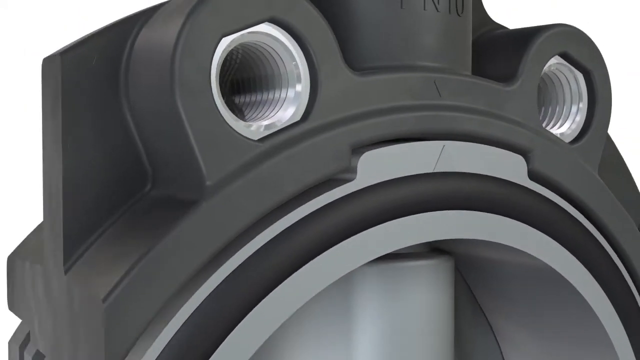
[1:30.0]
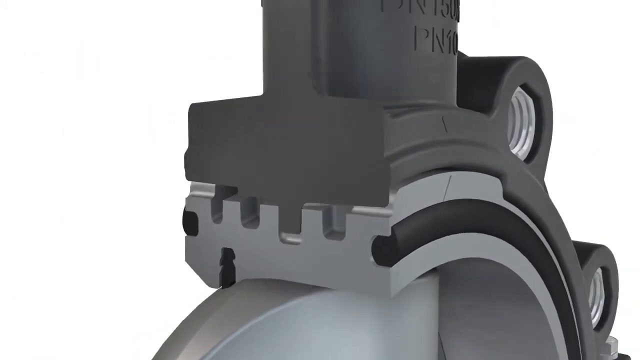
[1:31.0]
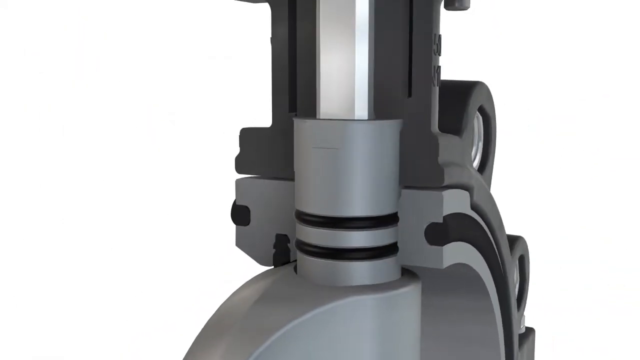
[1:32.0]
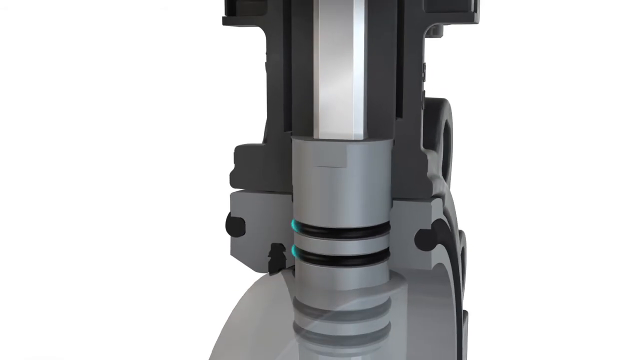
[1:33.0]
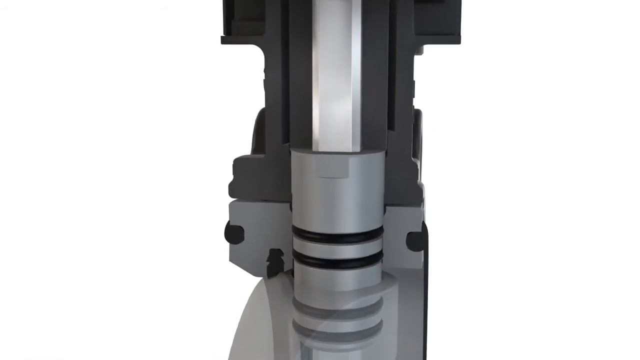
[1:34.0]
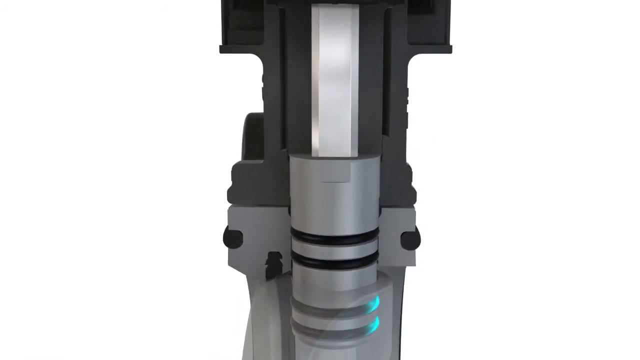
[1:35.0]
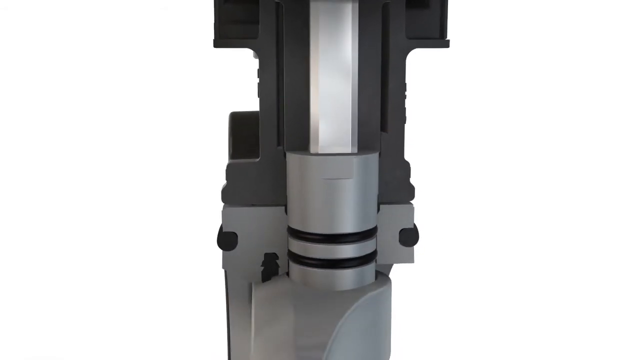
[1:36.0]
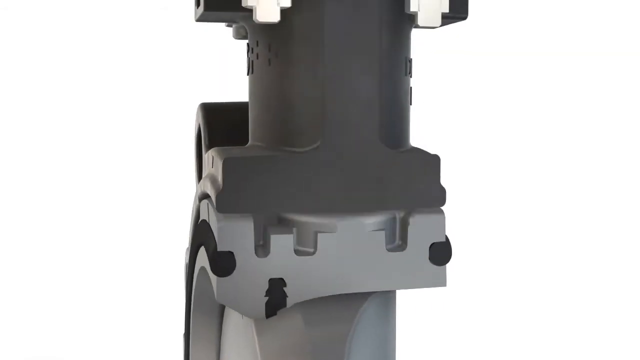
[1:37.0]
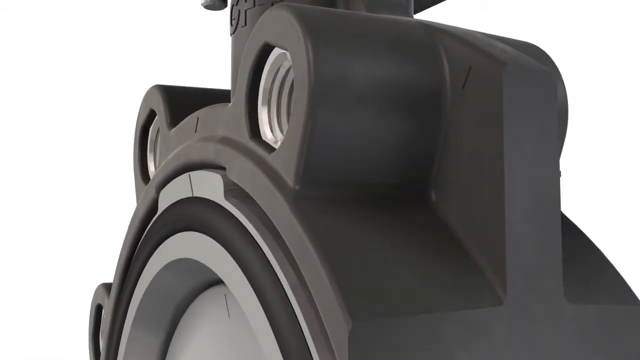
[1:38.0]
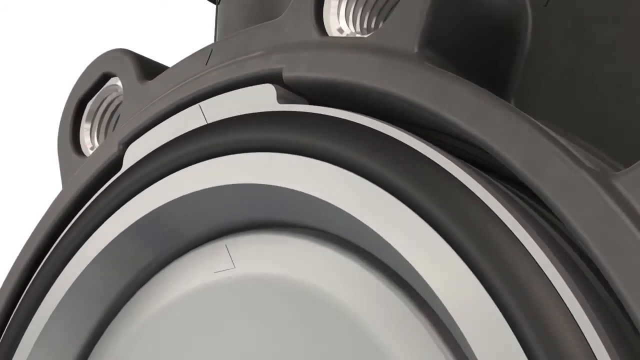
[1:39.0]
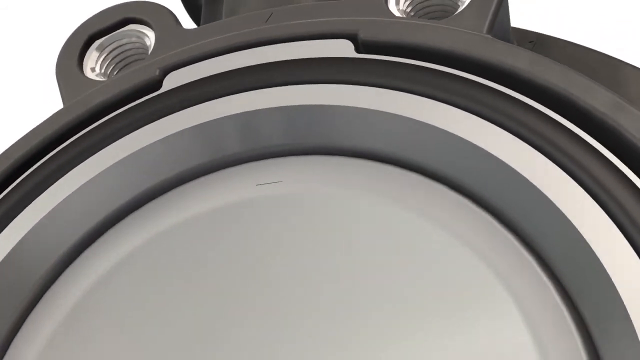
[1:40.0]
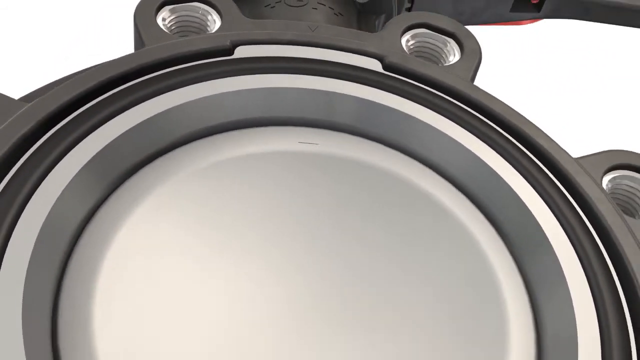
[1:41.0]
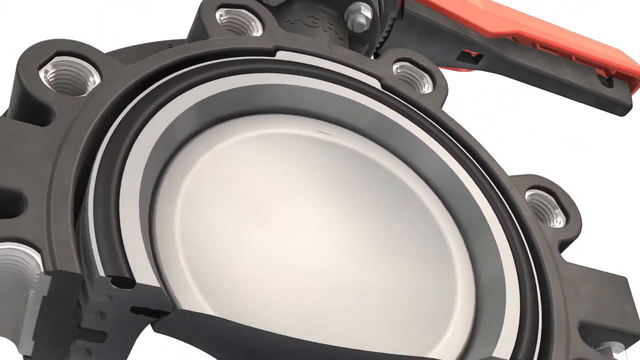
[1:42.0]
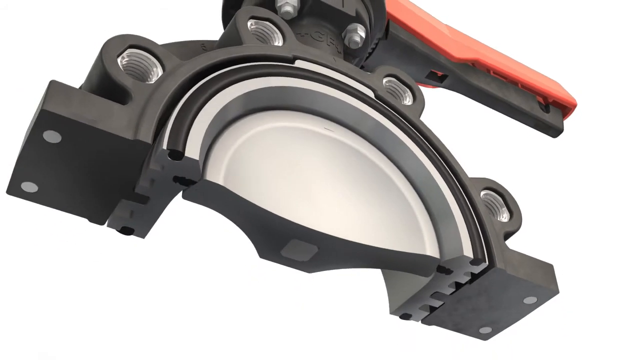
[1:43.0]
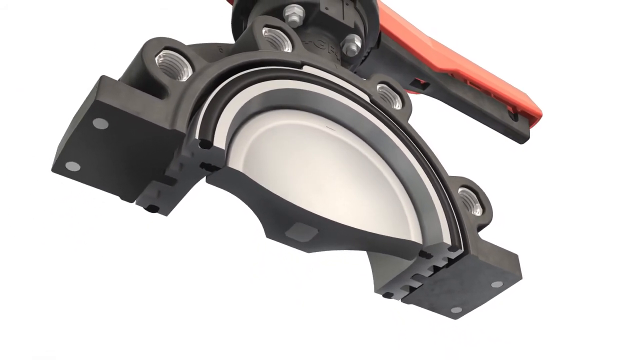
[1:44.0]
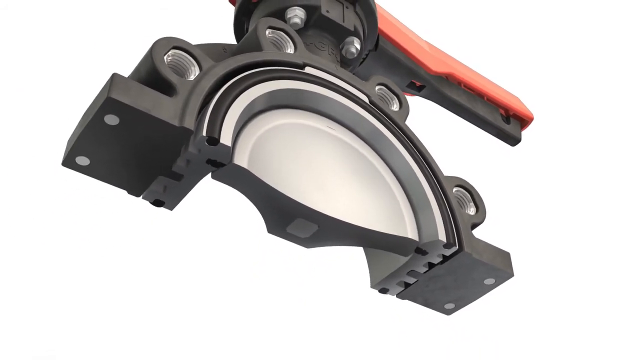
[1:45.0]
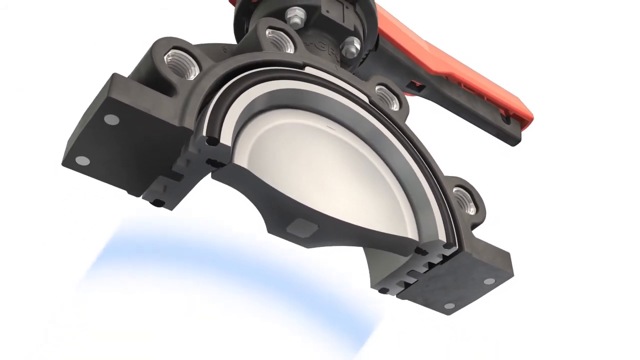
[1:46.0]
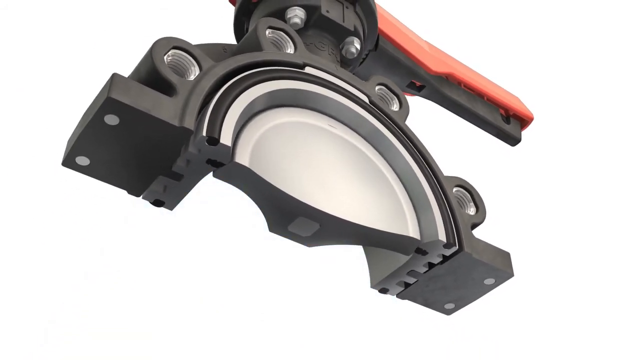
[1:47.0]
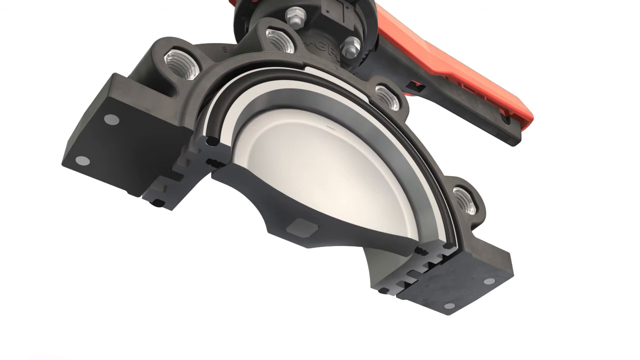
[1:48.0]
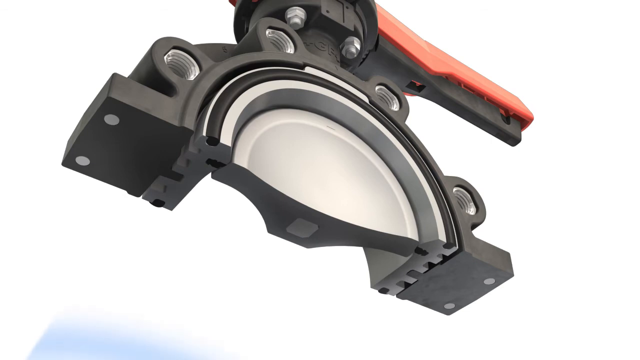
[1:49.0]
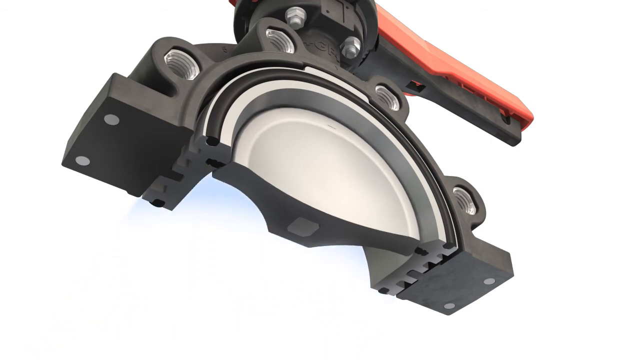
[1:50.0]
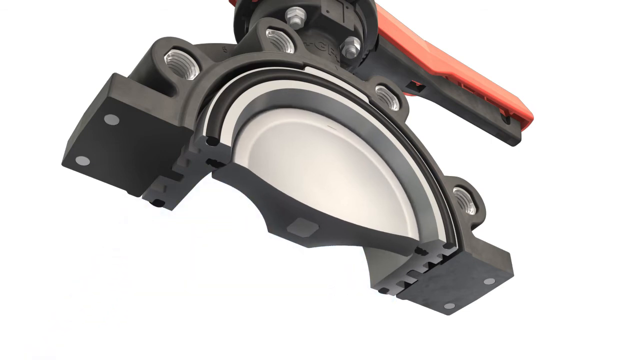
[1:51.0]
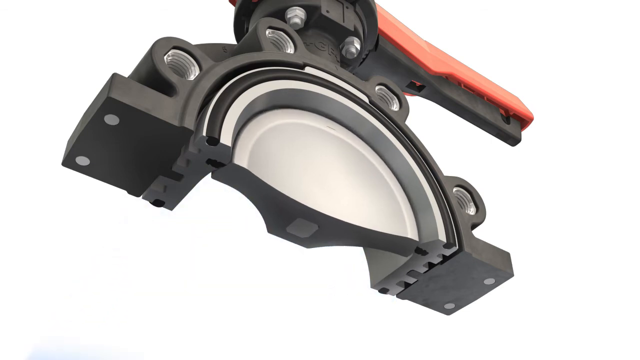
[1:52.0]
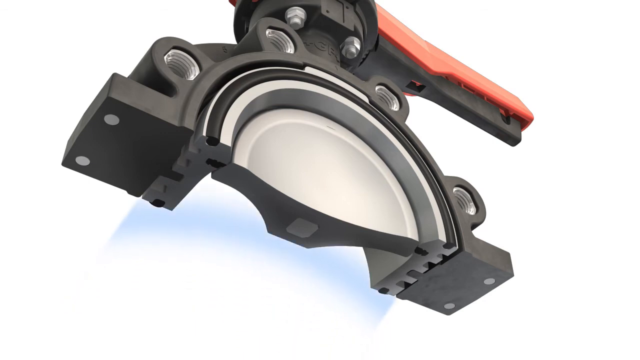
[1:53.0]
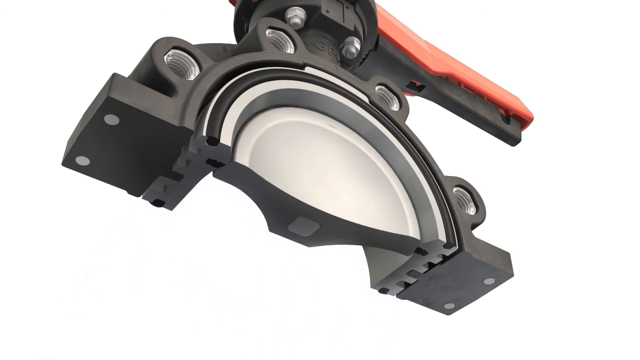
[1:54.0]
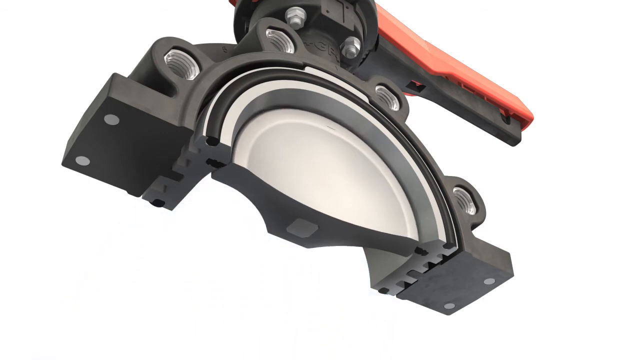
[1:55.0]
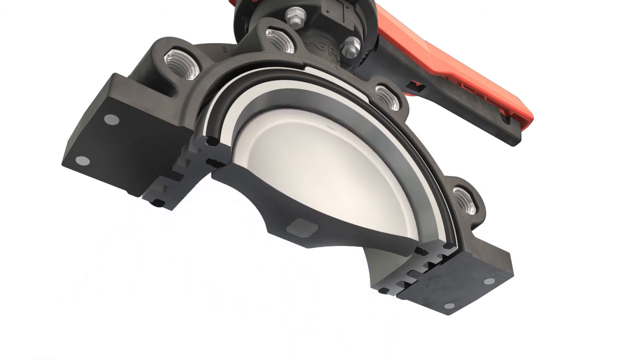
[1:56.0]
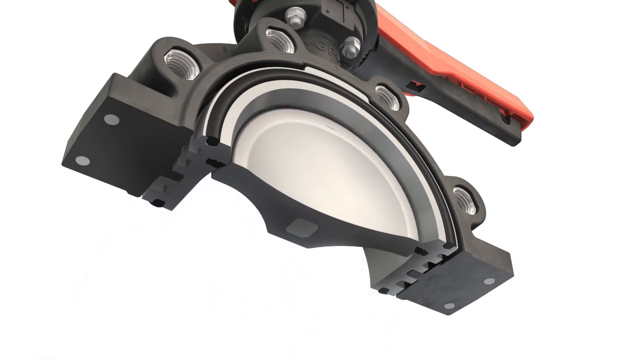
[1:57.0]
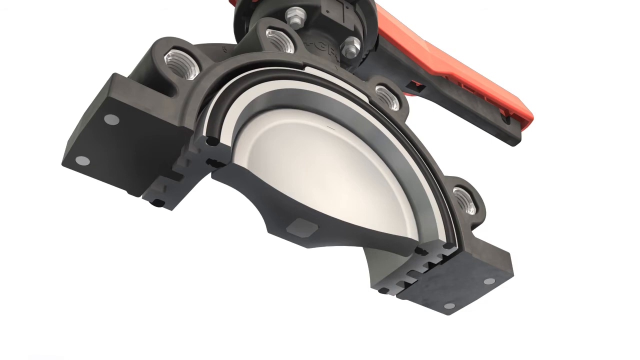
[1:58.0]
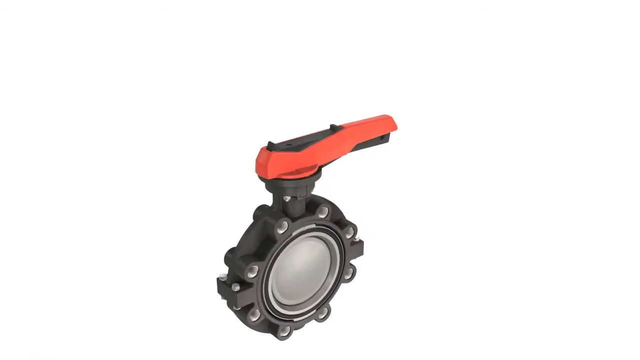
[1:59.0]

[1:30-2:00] The outer section on one half of the device disappears, revealing the inner section. A grey circular piece runs through the centre, with two black circular lines around it and a thinner metal piece above it. Just below, the two black pieces running around it are highlighted in blue, with the blue running around the circles. The outer case then reforms against the rest of the device, the animation filling the rest of the cog. The view zooms back down, and now the cross-section cuts through the bottom section rather than the side, splitting it in half so it looks like a semicircle instead of a full circle. There are two black posts on either side with two silver holes in them, and a flat surface beneath the circle that is thicker in the middle and thinner on each side. A blue shadow pushes against the outside of the circle, making it move forward slightly each time, around three times, before it goes back to white. A zoomed-out image of the full device with the red handle at the top follows.